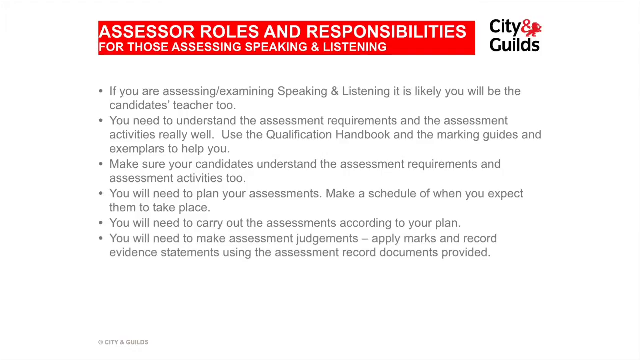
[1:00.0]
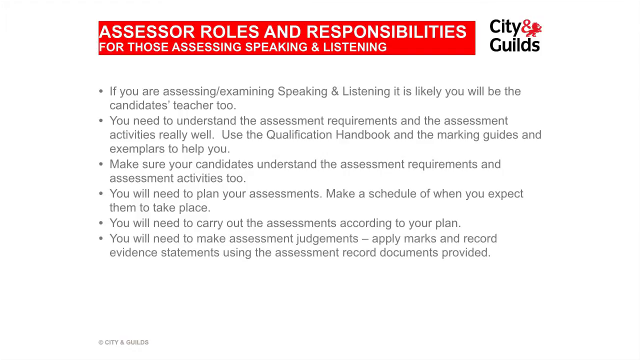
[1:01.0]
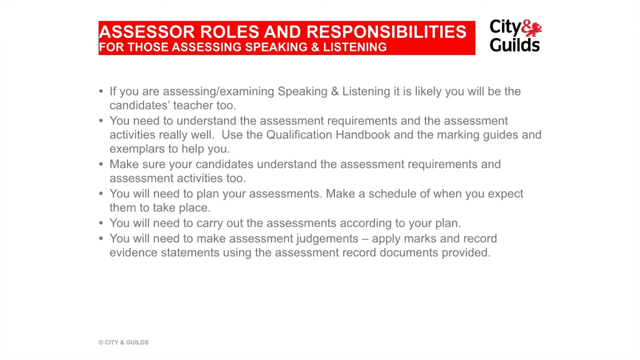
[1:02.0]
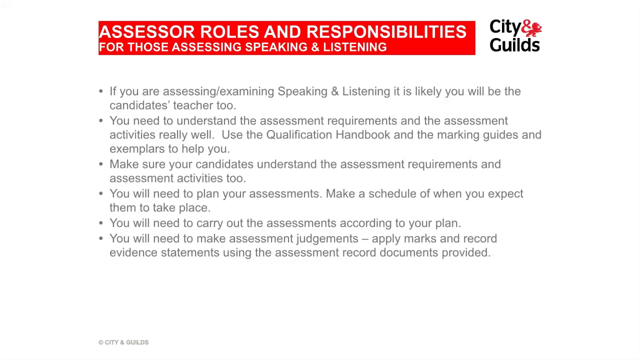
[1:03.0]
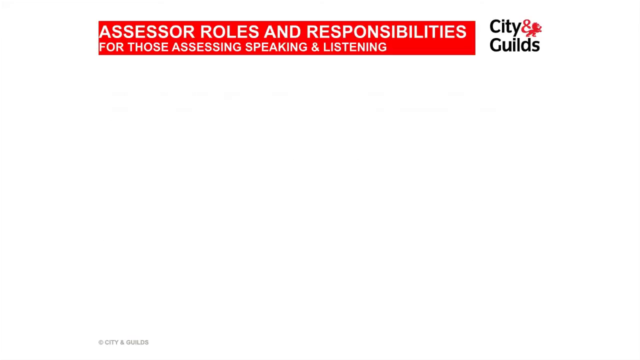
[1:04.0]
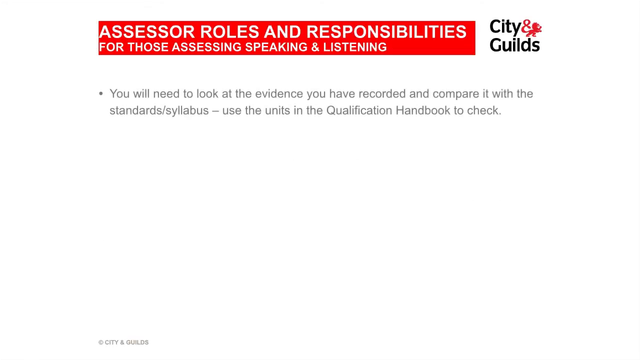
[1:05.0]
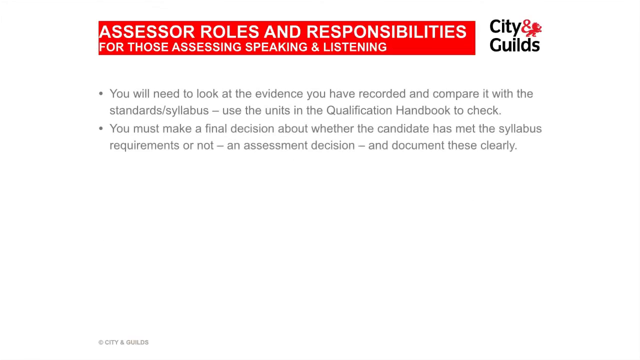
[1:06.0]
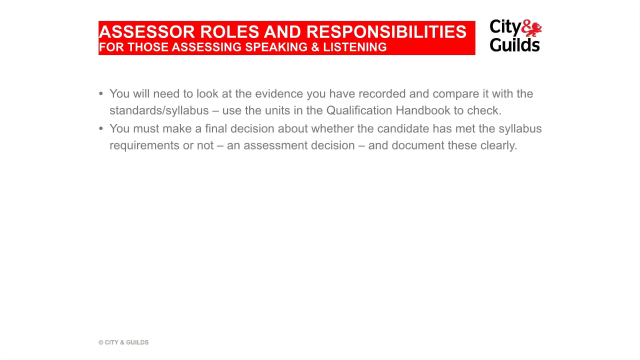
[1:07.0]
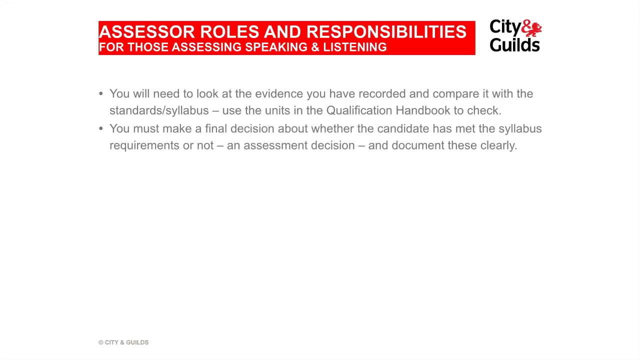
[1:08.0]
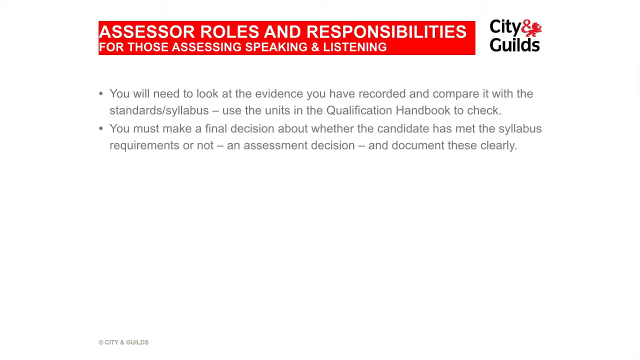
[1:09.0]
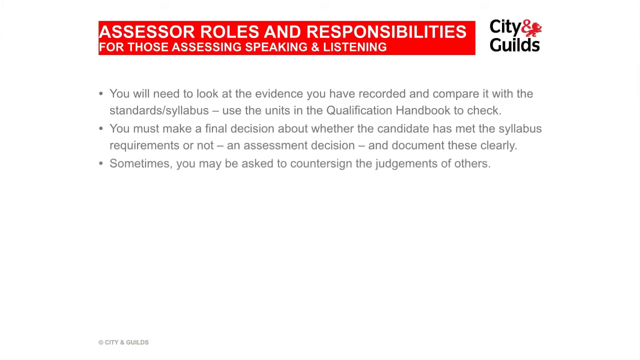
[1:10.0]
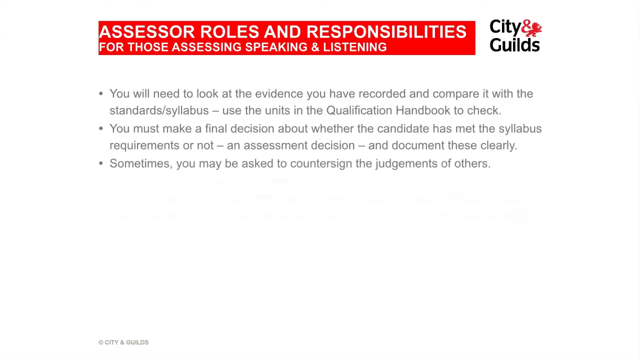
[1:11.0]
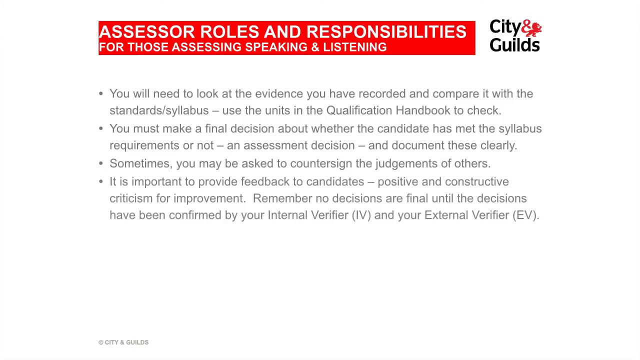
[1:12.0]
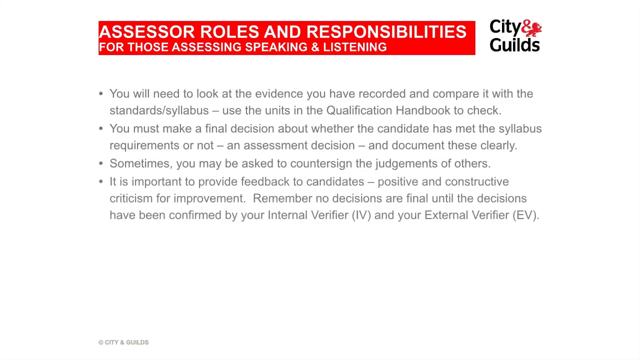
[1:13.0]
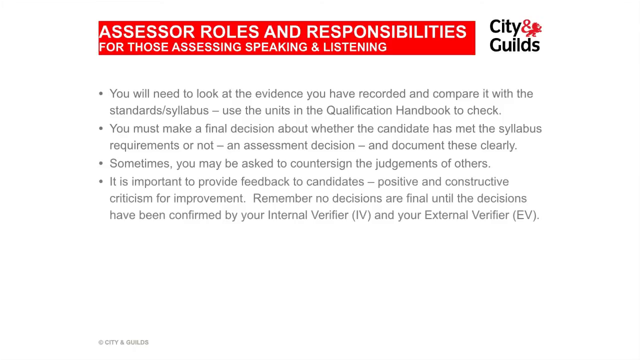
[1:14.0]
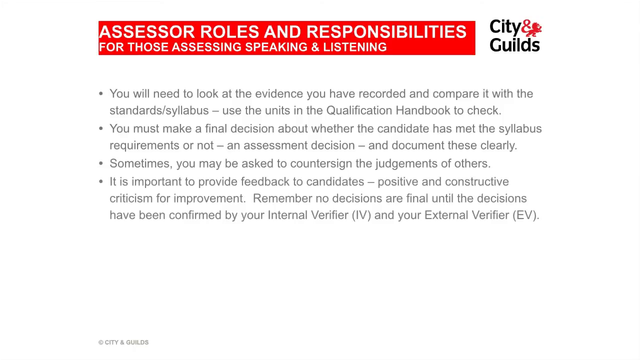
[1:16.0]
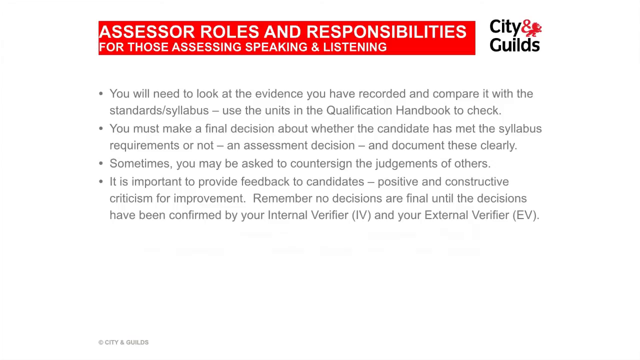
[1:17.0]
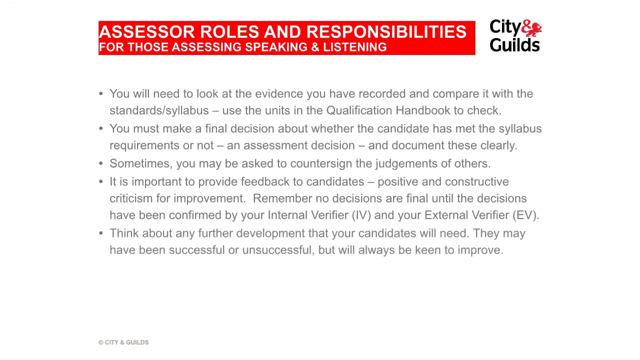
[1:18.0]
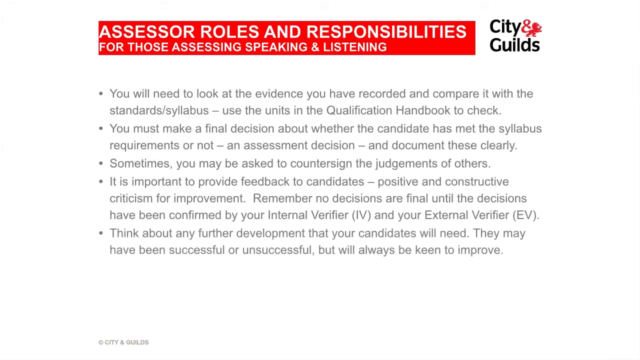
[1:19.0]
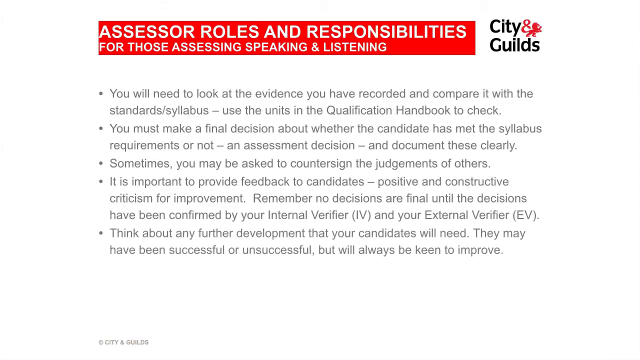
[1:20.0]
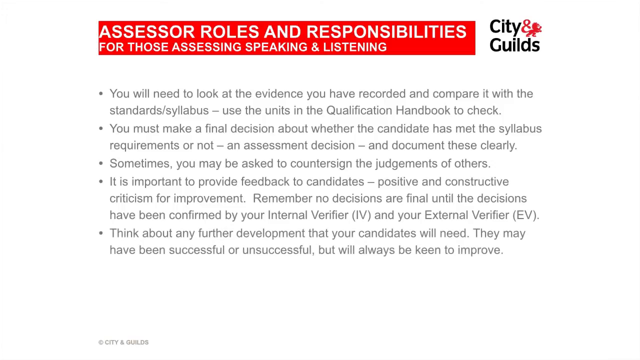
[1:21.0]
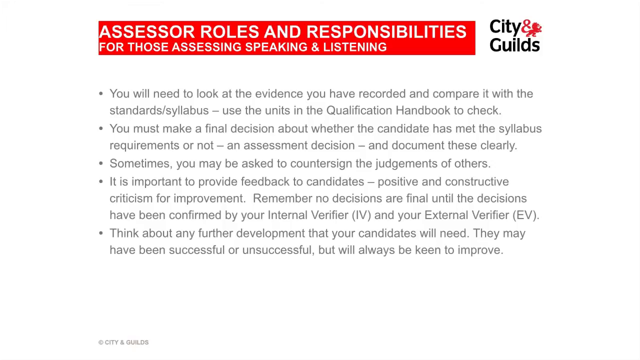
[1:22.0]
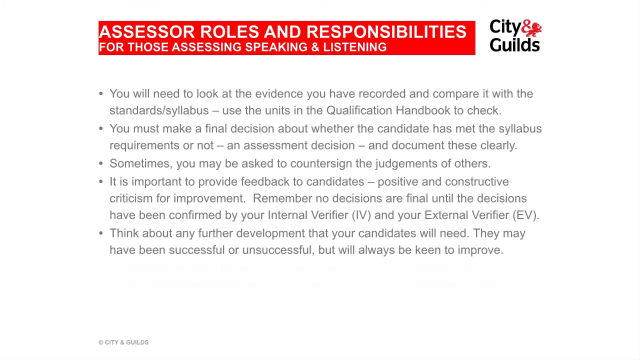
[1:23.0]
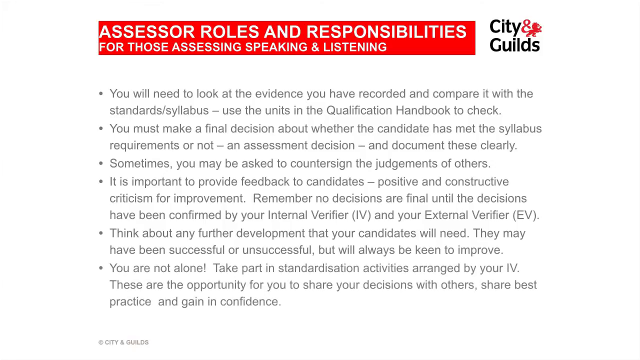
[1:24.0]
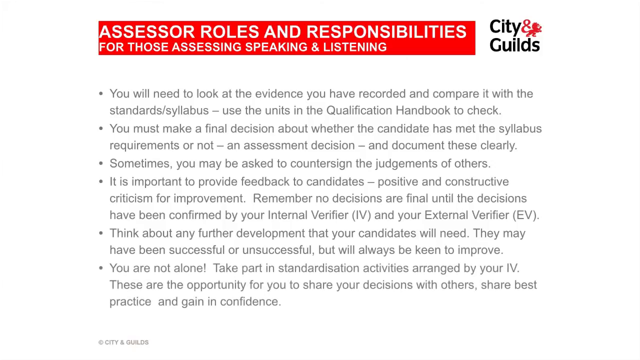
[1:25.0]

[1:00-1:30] A screen shows "assessor roles and responsibilities" at the top in white text on a red background, with the City and Guilds logo still in the top right. Bullet points below read: "If you are assessing, examining, speaking, and listening, it is likely you will be the candidate's teacher too. You need to understand the assessment requirements and the assessment activities really well. Use the qualification handbook and the marking guides and exemplars to help you. Make sure your candidates understand the assessment requirements and assessment activities too. You will need to plan your assessments. Make a schedule of when you expect them to take place. You will need to carry out the assessments according to your plan. You will need to make assessment judgments, apply marks, and record evidence statements using the assessment record documents provided." More bullet points follow: "You will need to look at the evidence you have recorded and compare it with the standards syllabus. Use the units in the qualification handbook to check. You must make a final decision about whether the candidate has met the syllabus requirements or not, an assessment decision, and document these clearly." It also says "It is important to provide feedback to candidates, positive and constructive criticism for improvement. Remember, no decisions are final until the decisions have been confirmed by your internal verifier and your external verifier."